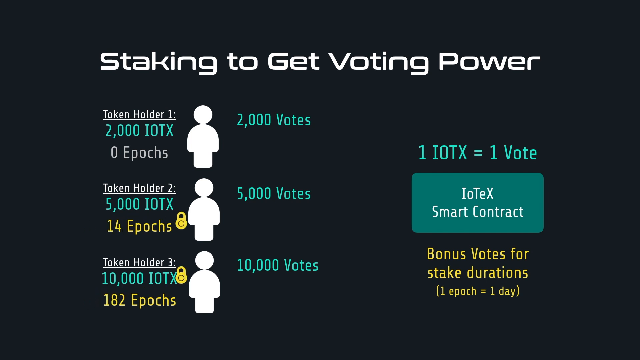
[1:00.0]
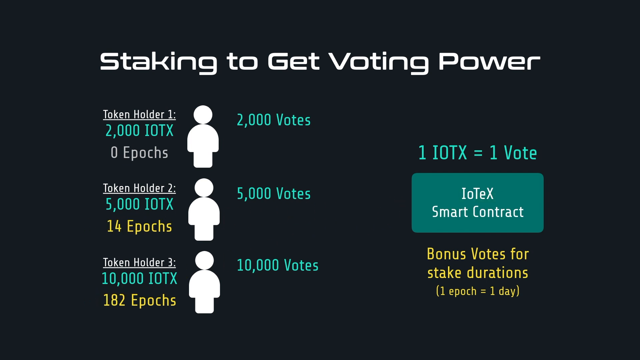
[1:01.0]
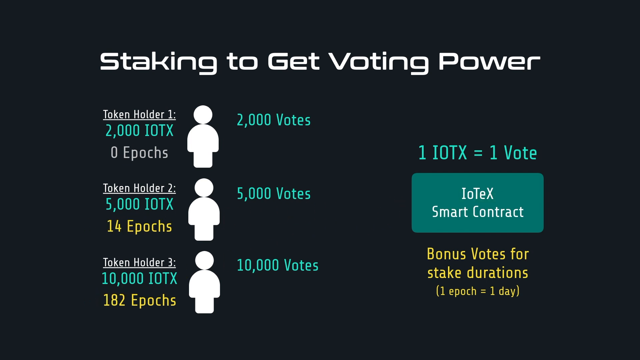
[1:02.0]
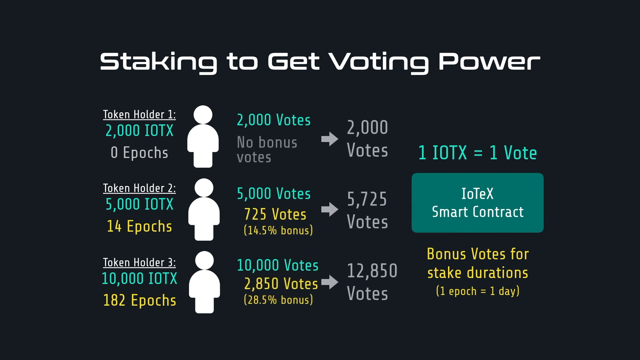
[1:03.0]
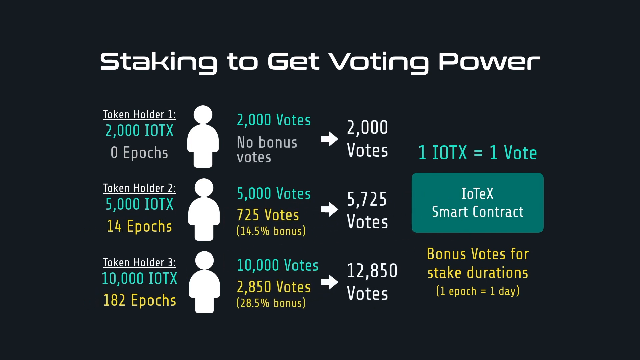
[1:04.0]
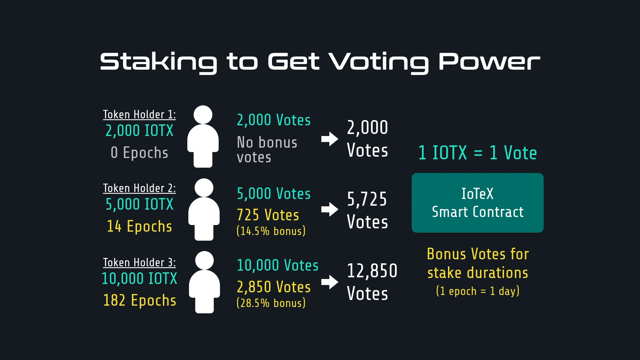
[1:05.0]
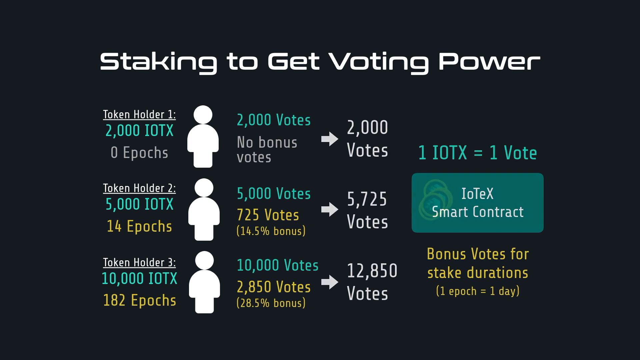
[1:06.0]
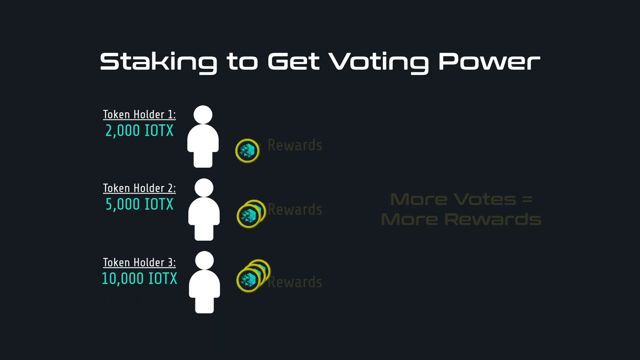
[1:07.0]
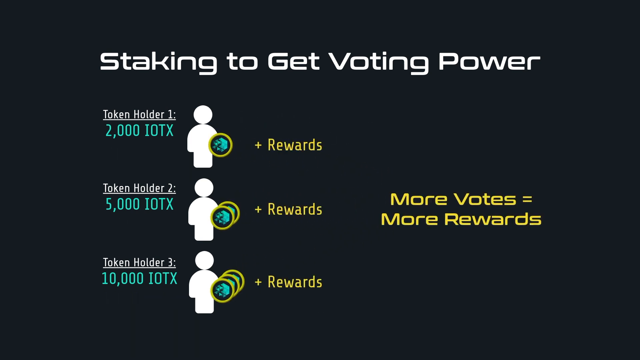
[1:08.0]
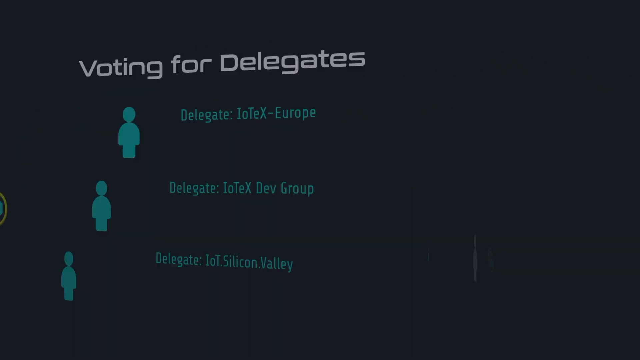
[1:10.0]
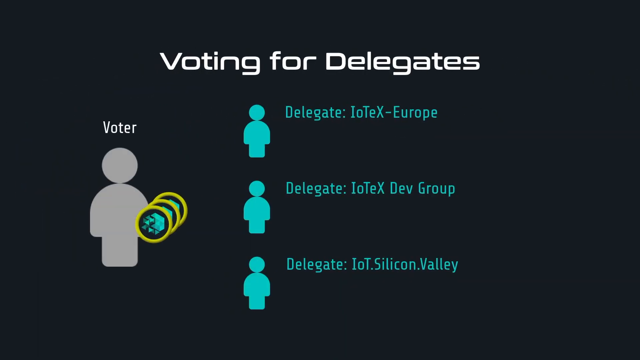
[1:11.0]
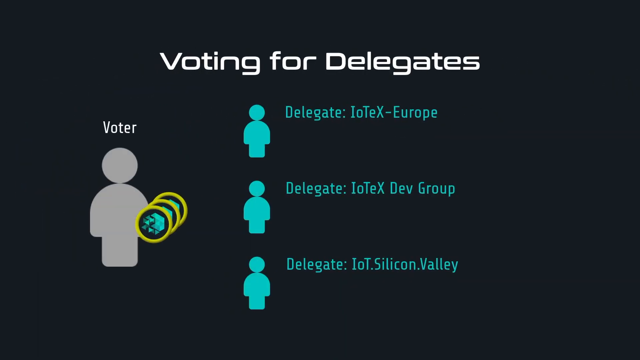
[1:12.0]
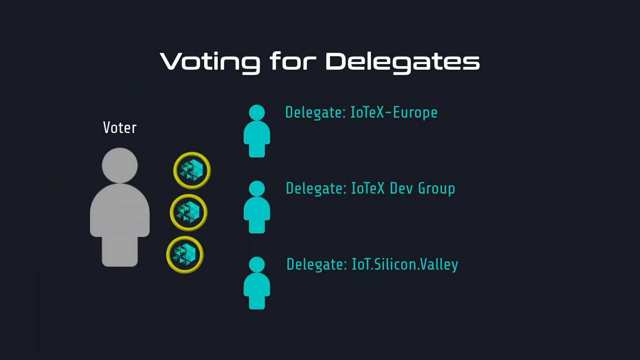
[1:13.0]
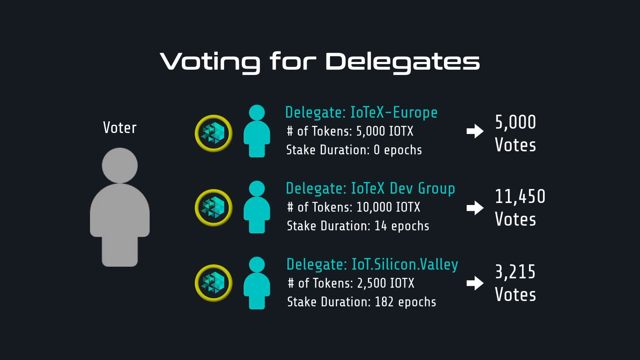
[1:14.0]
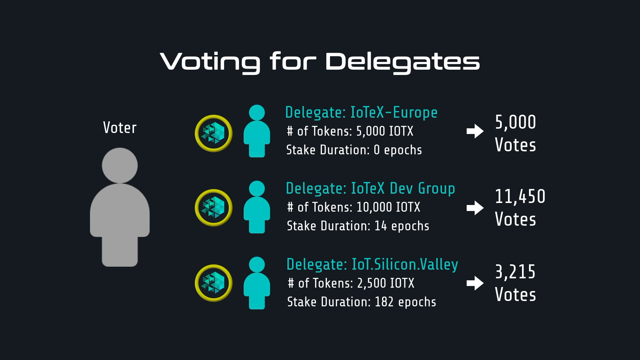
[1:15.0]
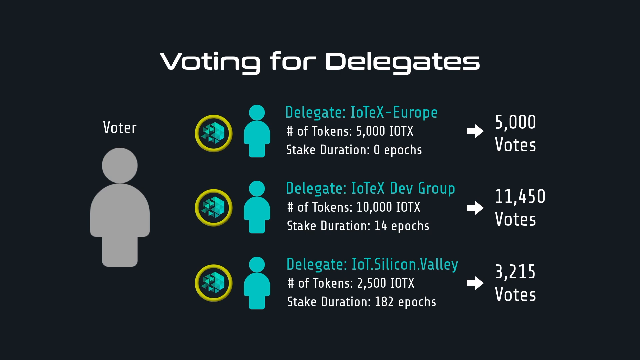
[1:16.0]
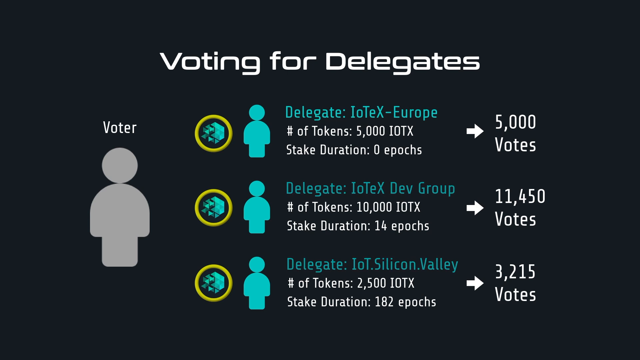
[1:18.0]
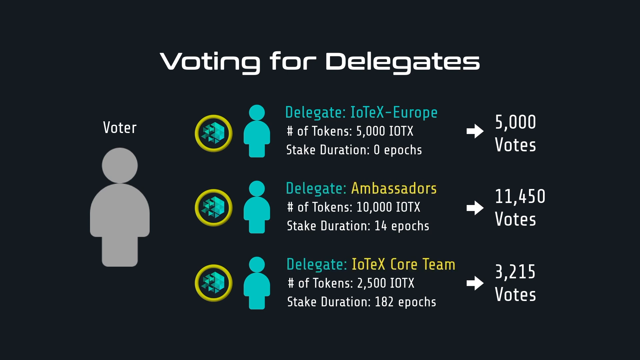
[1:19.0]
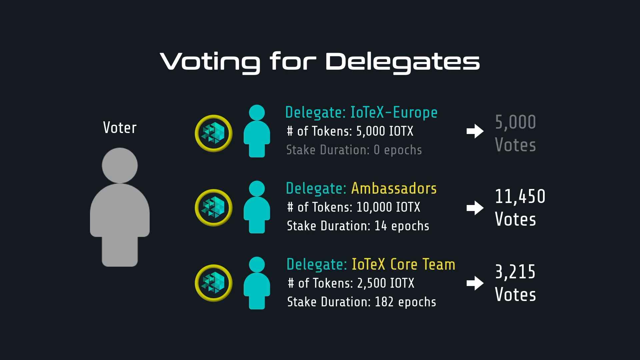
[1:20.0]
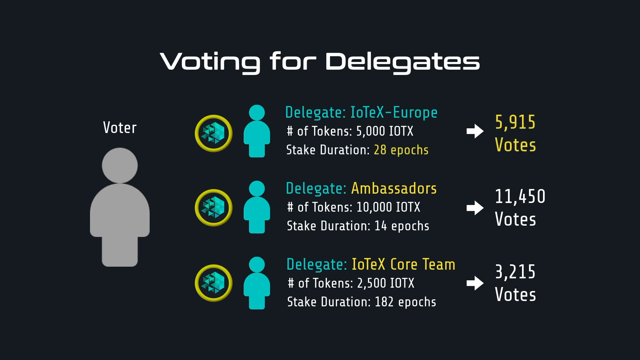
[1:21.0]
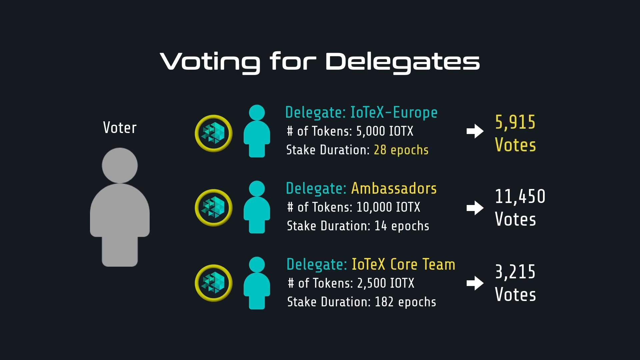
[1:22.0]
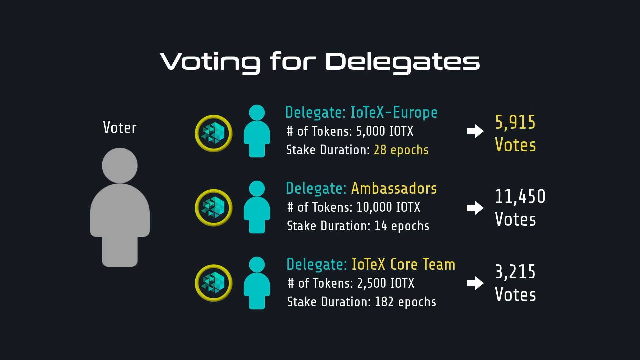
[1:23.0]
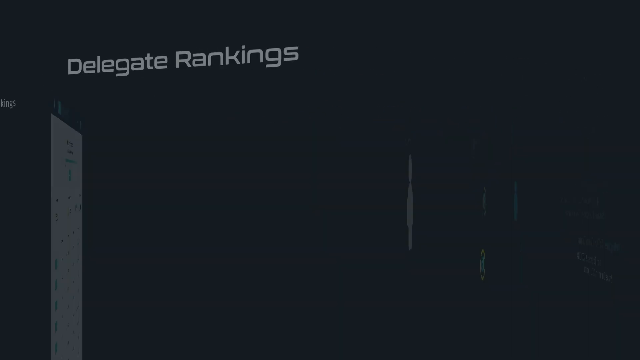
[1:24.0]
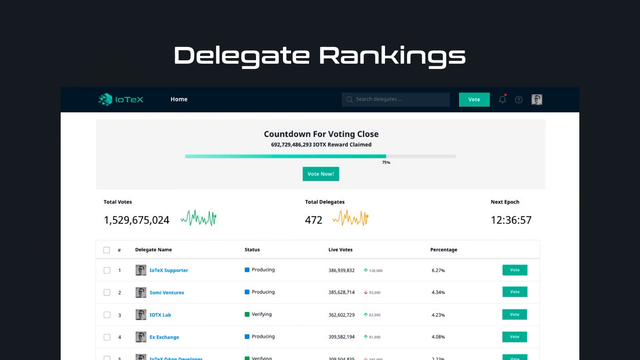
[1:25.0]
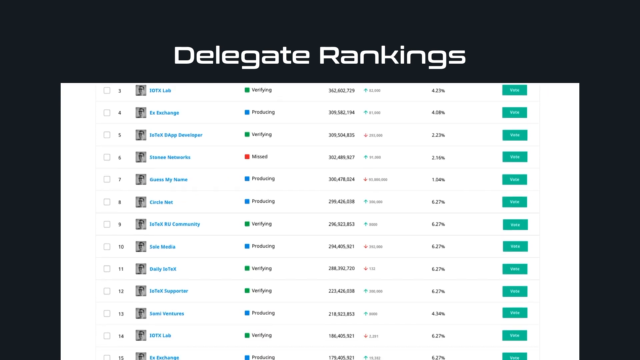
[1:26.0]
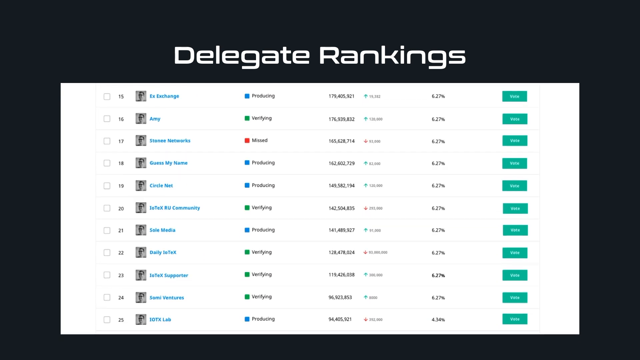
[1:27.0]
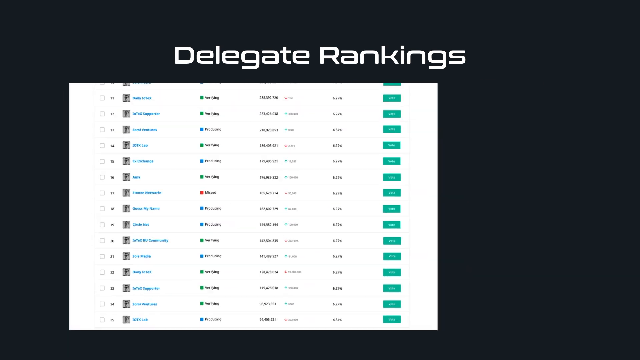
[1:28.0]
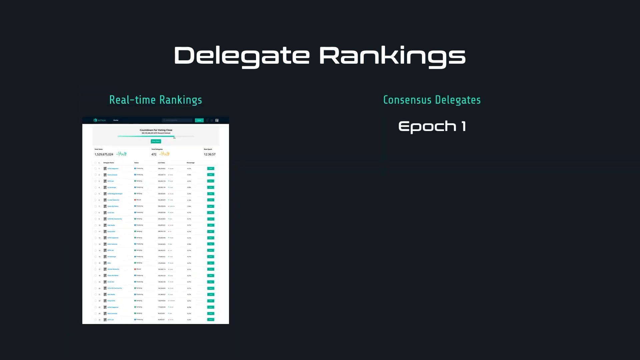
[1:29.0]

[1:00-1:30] A slide has white text at the top reading "staking to get voting power". Underneath are three stick figures arranged somewhat like a column, one on top of the other, with text on the left and right sides; the left side has white, turquoise green and yellow text, and the right side has the same colors. A box appears and then disappears, and a bunch of circles with yellow borders and what looks like a green logo inside them appear; they seem to move from the right of the screen to the left, right next to the white stick figures. Yellow text then appears on the right side. The video then skips to another slide reading "voting for delegates" in white. A bigger gray stick figure is on the left side, and the same yellow-bordered circles move from the left, where that figure is, to tinier turquoise green stick figures on the right. There is also turquoise green and white text to the right of those figures.